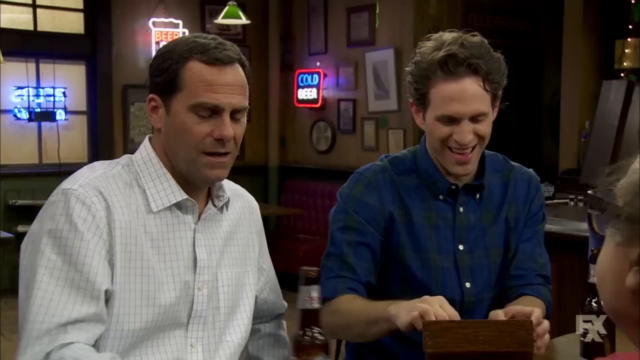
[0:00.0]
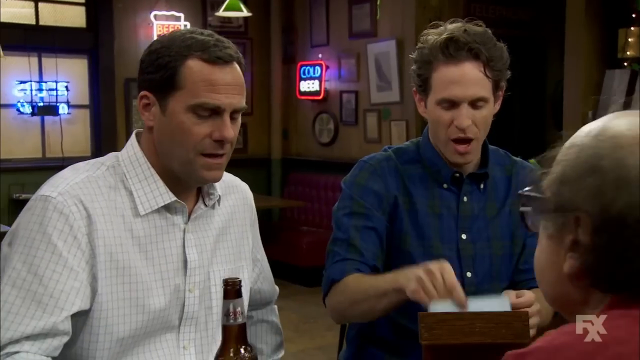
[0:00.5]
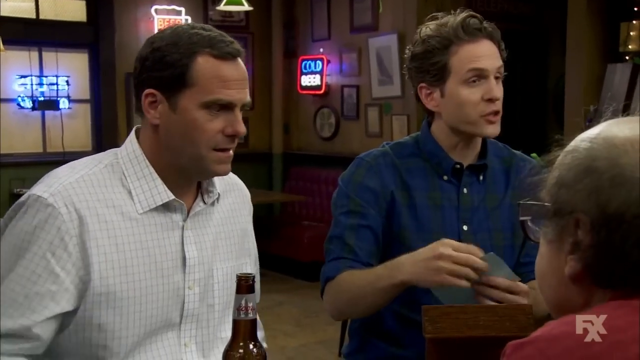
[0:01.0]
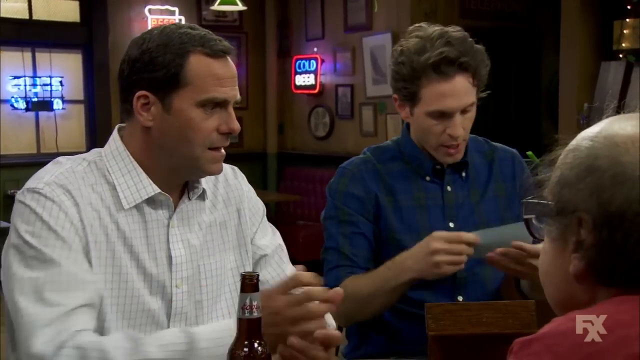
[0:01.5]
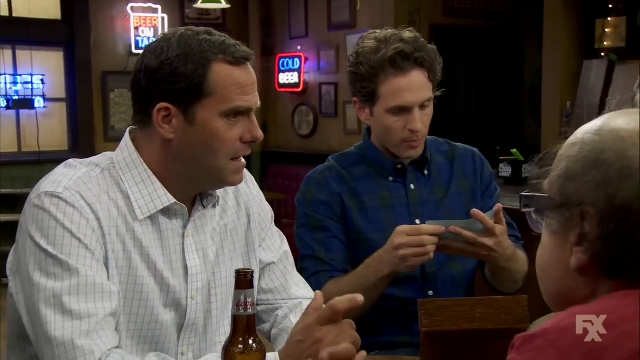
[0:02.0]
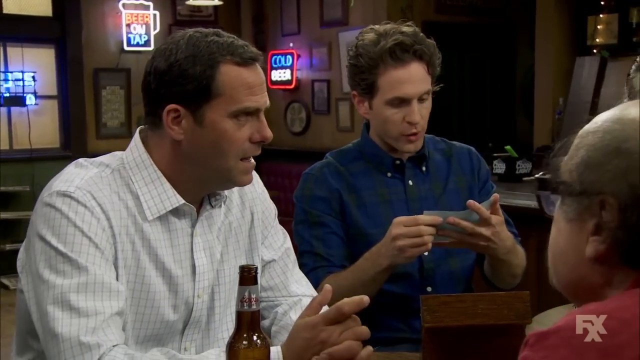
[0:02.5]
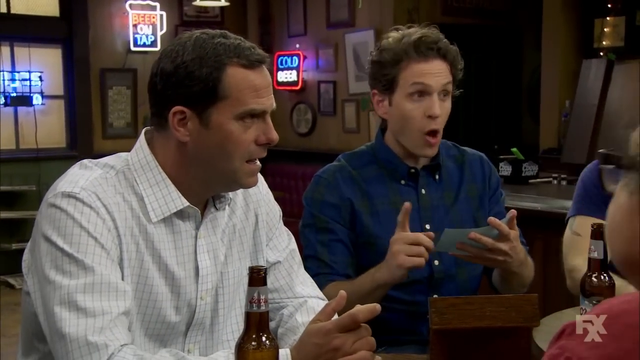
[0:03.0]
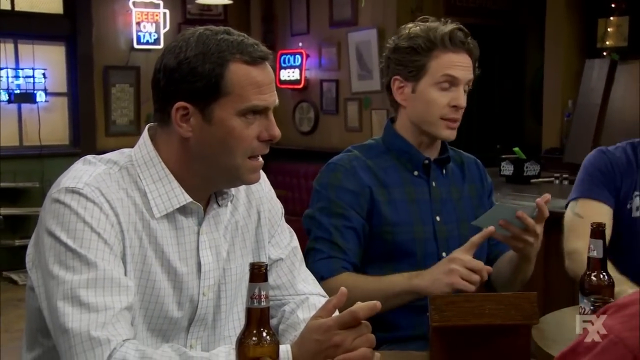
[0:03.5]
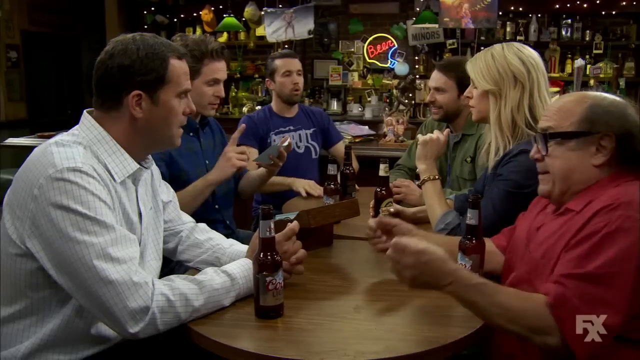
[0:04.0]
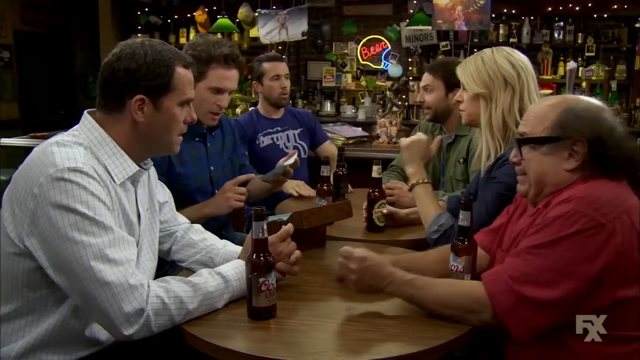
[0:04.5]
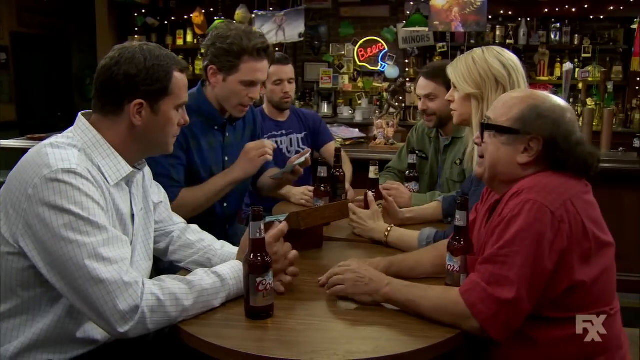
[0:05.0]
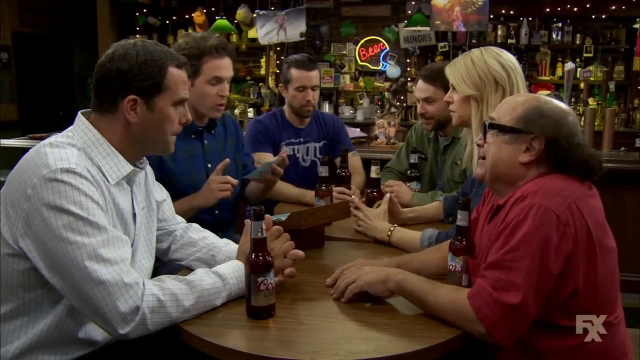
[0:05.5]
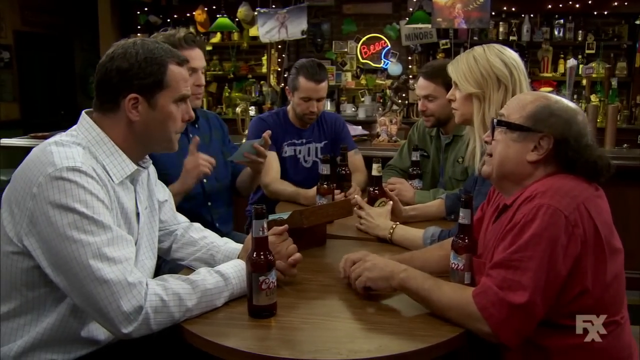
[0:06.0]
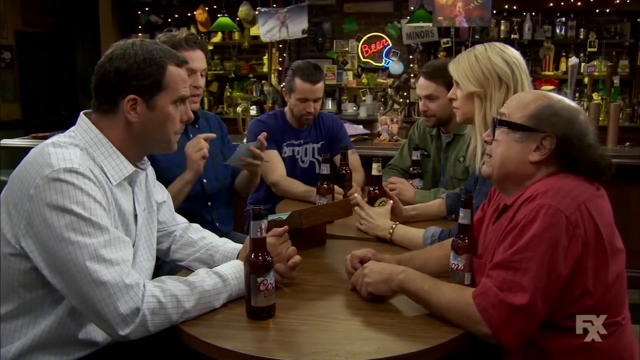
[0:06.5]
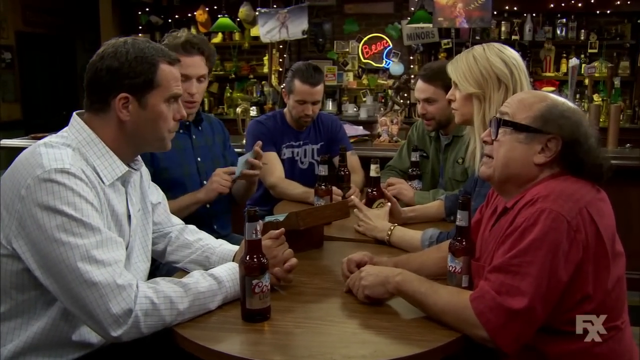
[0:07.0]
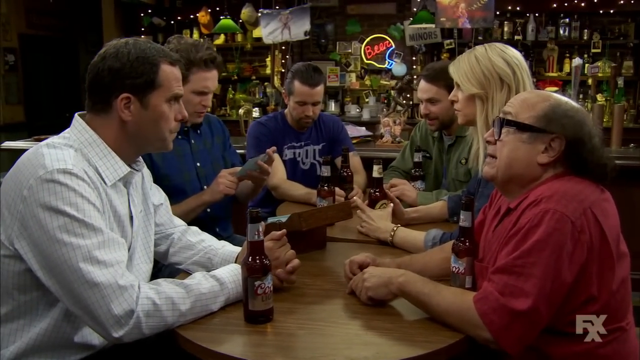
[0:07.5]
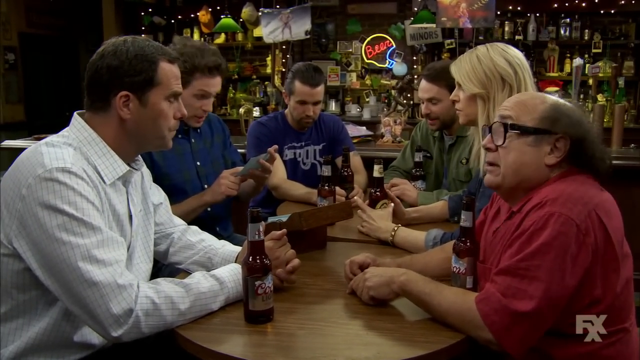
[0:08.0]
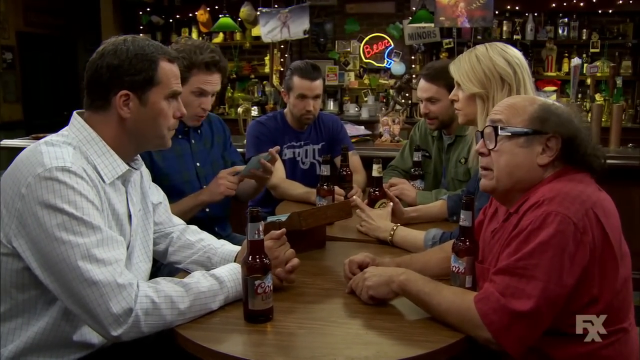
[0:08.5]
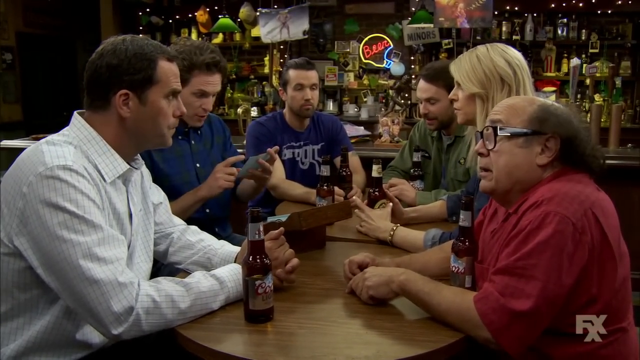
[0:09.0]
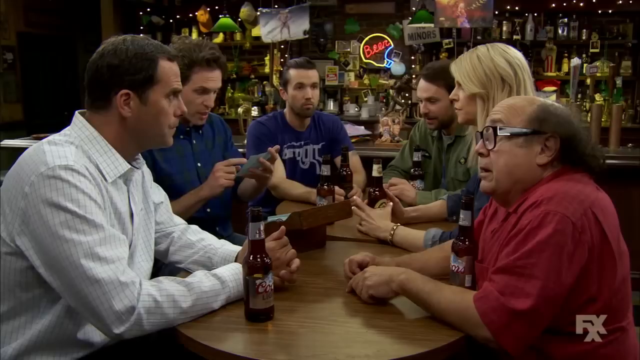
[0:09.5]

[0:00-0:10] A man of about 45 with dark brown hair wears a long-sleeved white shirt with tan lines running up and down and grid lines on it. He sits next to a man with bushy, wavy hair in a blue and green plaid shirt. They are in a bar; behind them, on the wall in the corner, is a neon cold beer sign and some framed photos whose contents cannot be made out. There is a window on that side, another neon sign on the wall next to the window, a hanging green light, and a burgundy booth in the corner with a brown table. The men are talking while sitting at a table. Across from them, opposite the man in the white shirt, is Danny DeVito in a red shirt and his black glasses, possibly around 50 or 60 years old. He sits next to a blonde-haired woman who looks about 45, wearing a blue shirt with her sleeves rolled up. To her right is a man with a trim beard and mustache and brown hair, wearing a green shirt, and they are talking. Another man, not seen at first, sits next to the man in the blue and green plaid shirt; he has a beard and mustache and wears a blue t-shirt with writing on it that is not legible. There are beers on the table but no food.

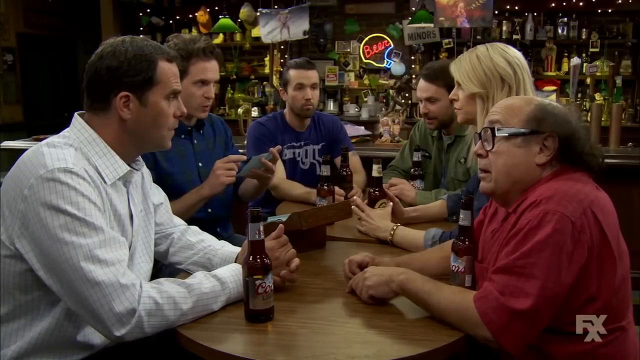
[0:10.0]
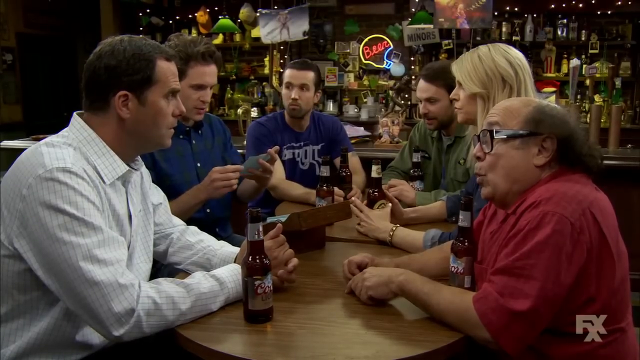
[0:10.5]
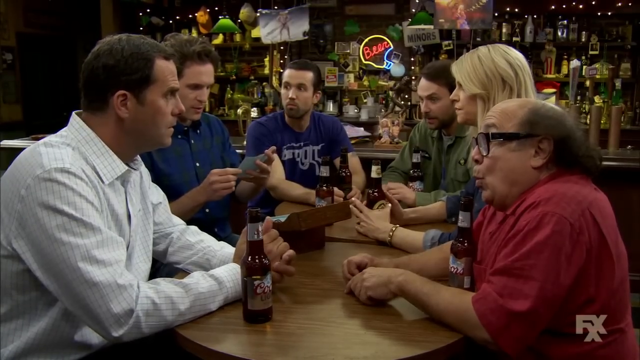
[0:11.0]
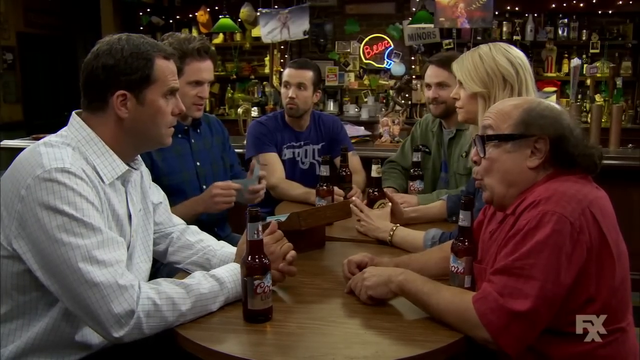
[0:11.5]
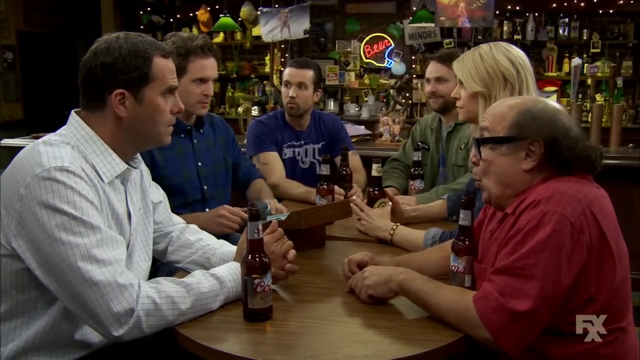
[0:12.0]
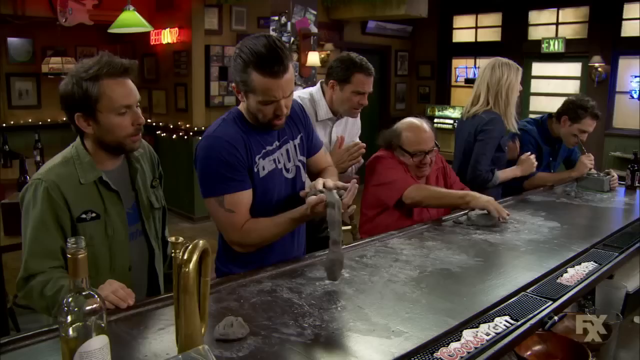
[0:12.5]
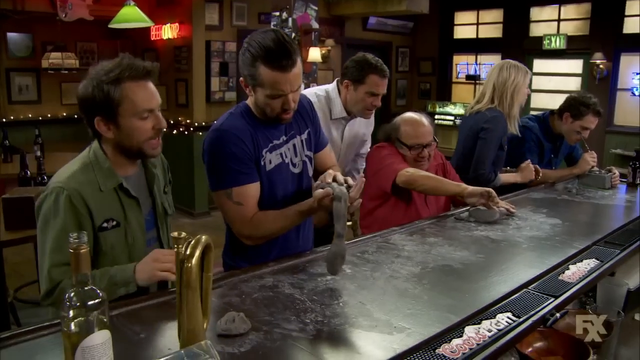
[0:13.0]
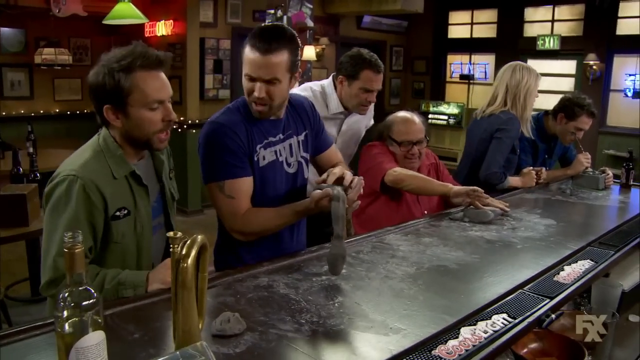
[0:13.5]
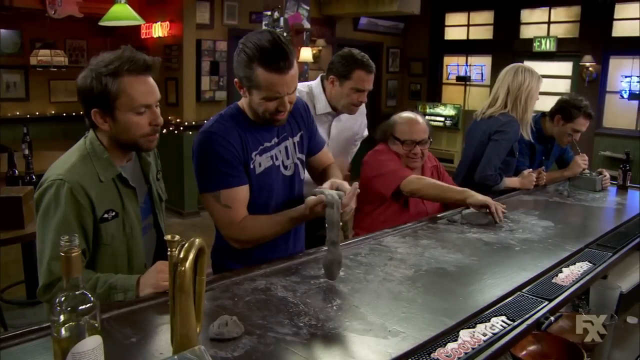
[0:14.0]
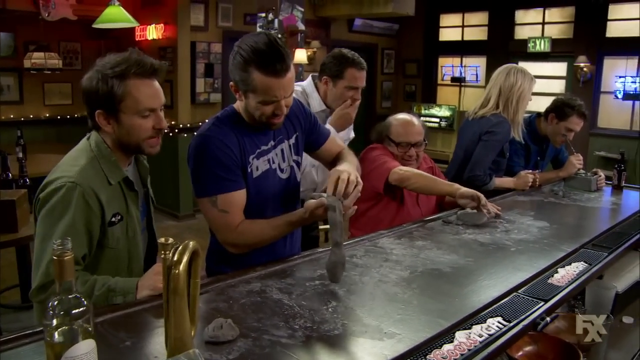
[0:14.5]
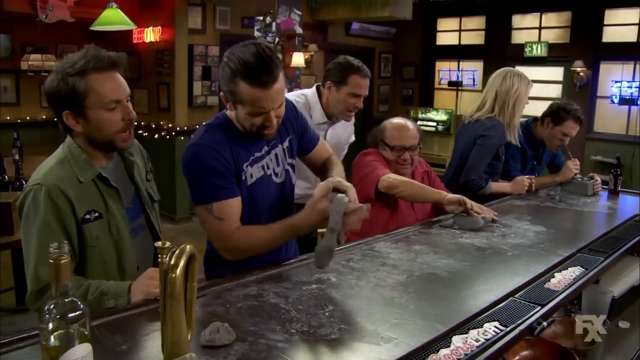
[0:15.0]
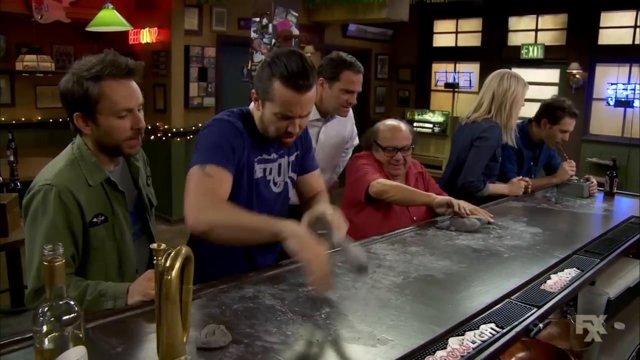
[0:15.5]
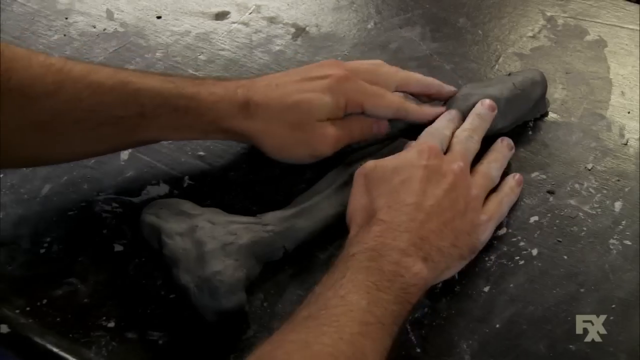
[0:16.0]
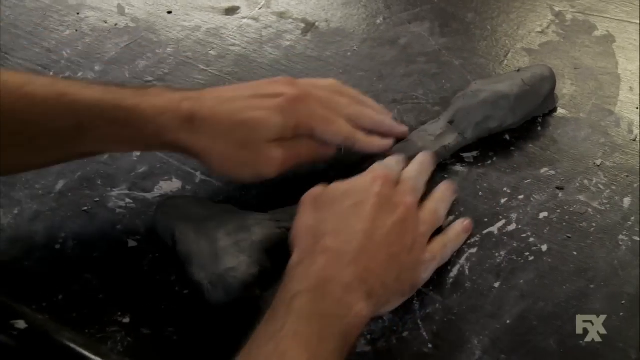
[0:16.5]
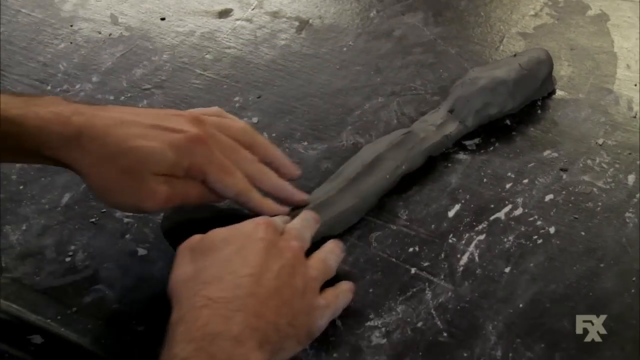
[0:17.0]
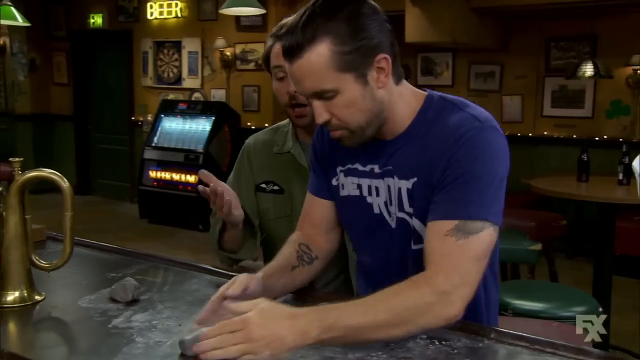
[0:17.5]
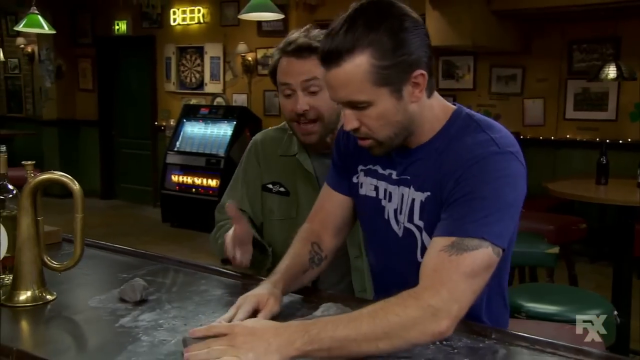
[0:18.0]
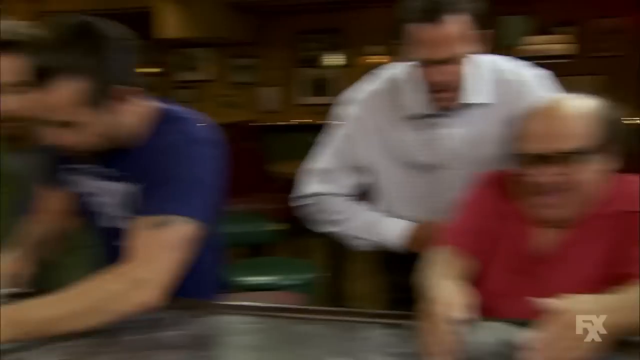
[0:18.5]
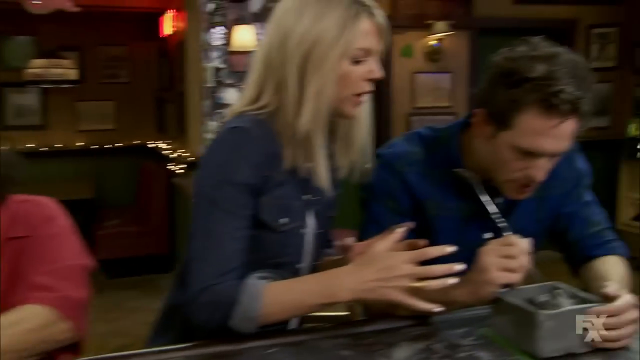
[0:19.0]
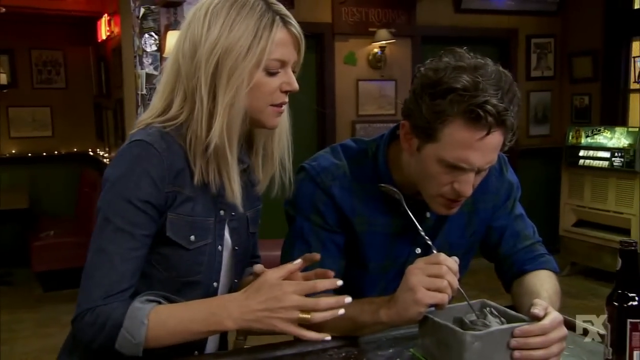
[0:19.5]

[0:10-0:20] The scene is the same bar. At the end of the table, behind everyone, there is a lot of junk on the wall. Behind the bar there is all kinds of alcohol and what looks like all kinds of bottles and other things, though it is hard to see what they are. The group now appears to be at the bar. The man in the green shirt is on the far left. Next to him is the man in the blue t-shirt with graphics on it, and to his left is the man in the white shirt, standing a little behind Danny DeVito, who is sitting down in his red shirt. Next to Danny DeVito is the blonde-haired woman in the blue shirt, and next to her is the man in the blue and green shirt. They appear to be making something out of dark grey clay on the bar.